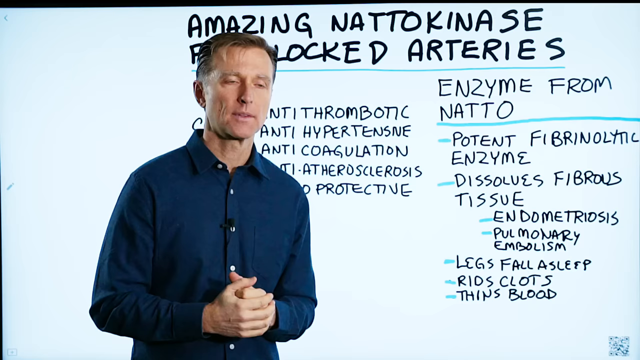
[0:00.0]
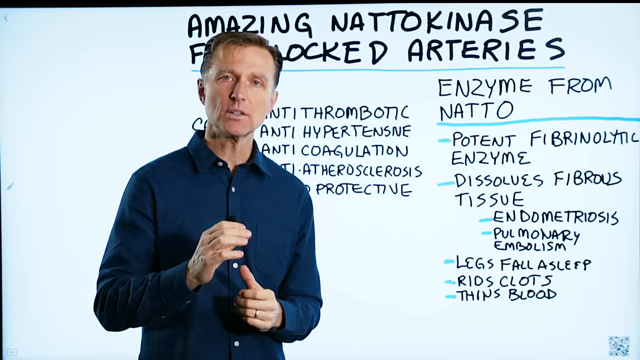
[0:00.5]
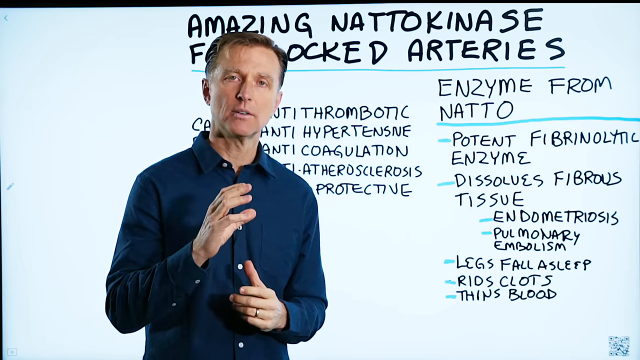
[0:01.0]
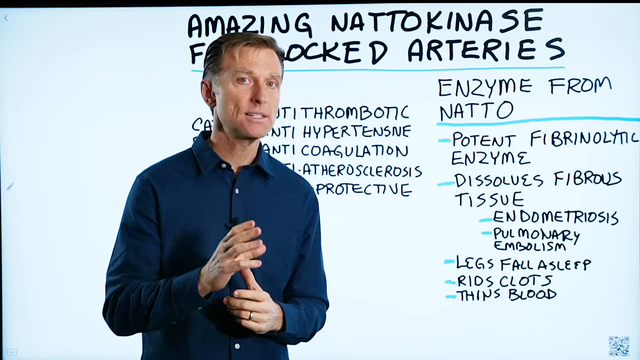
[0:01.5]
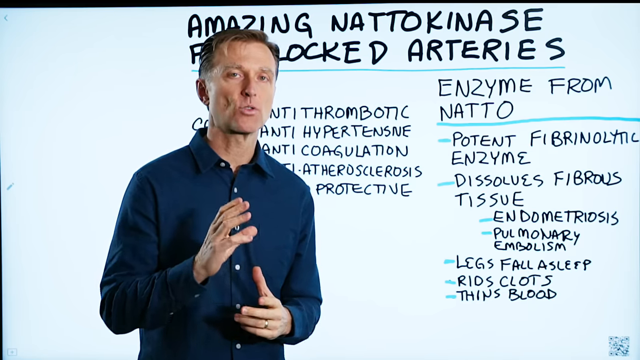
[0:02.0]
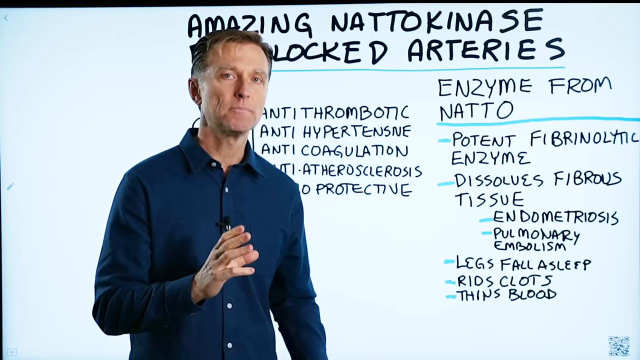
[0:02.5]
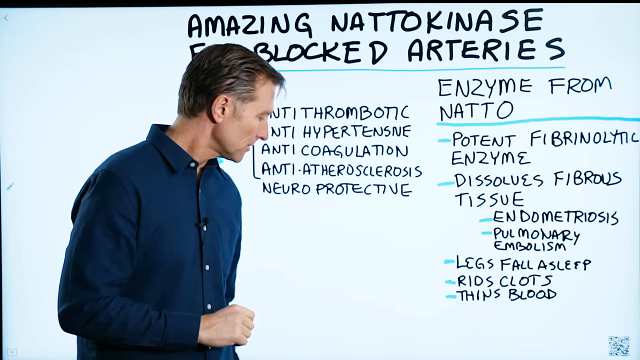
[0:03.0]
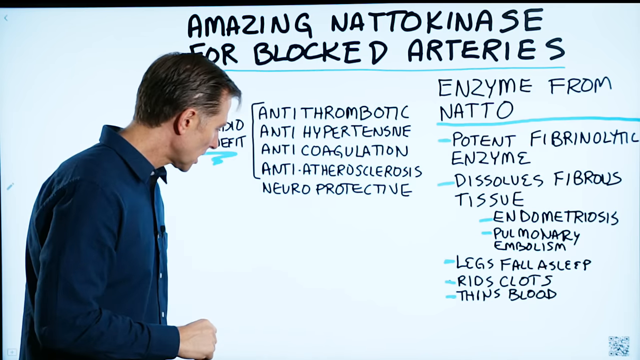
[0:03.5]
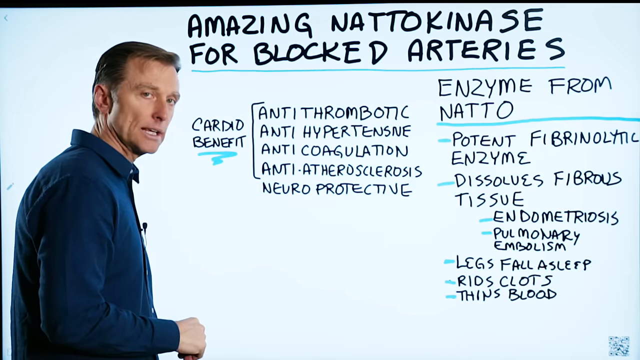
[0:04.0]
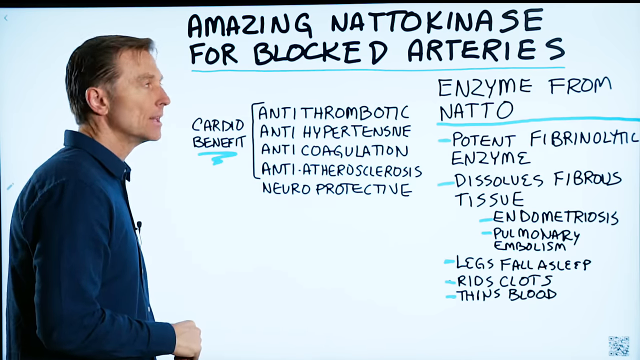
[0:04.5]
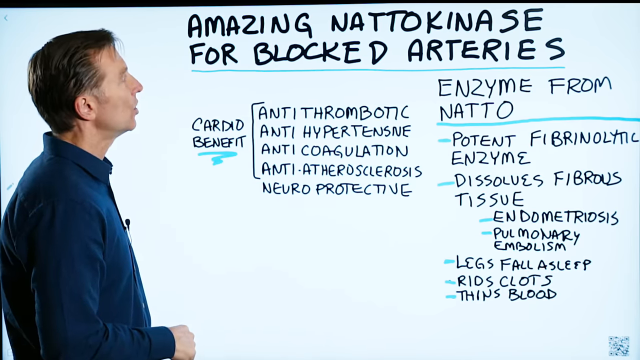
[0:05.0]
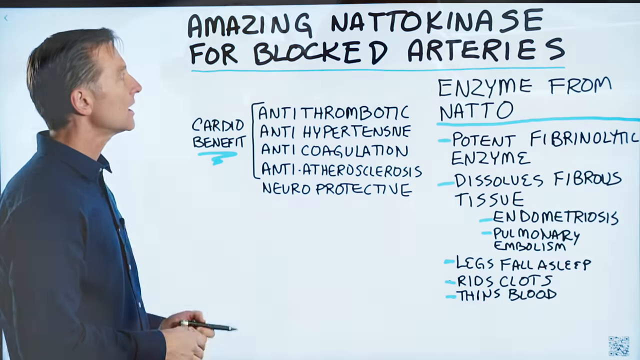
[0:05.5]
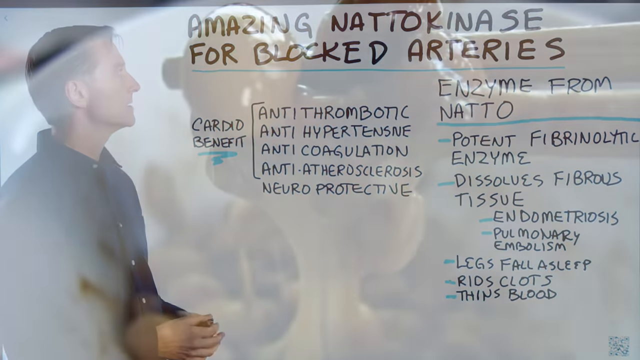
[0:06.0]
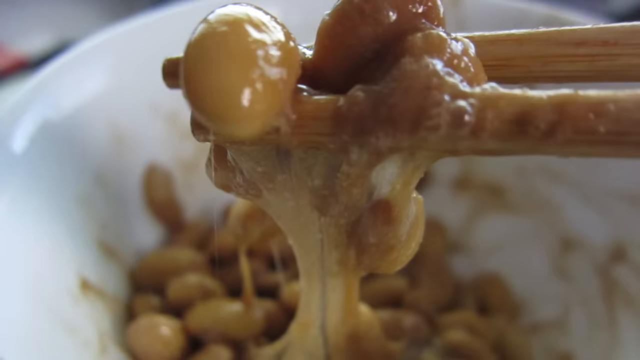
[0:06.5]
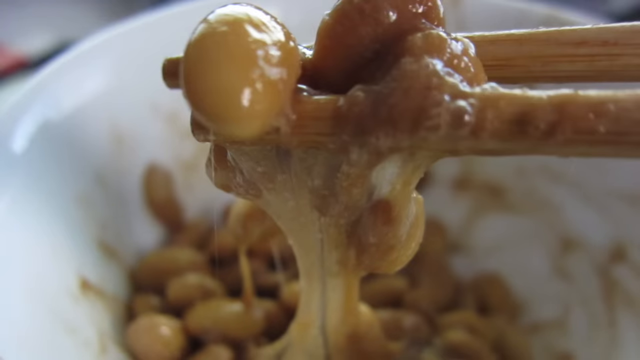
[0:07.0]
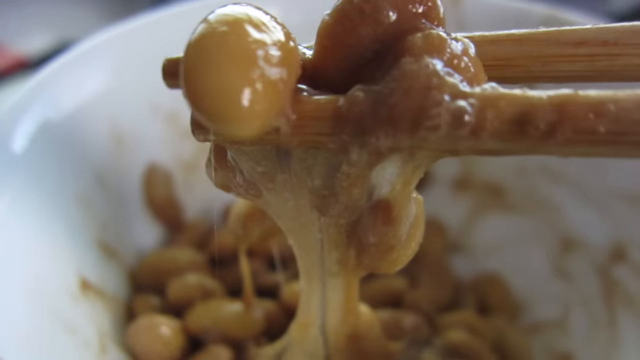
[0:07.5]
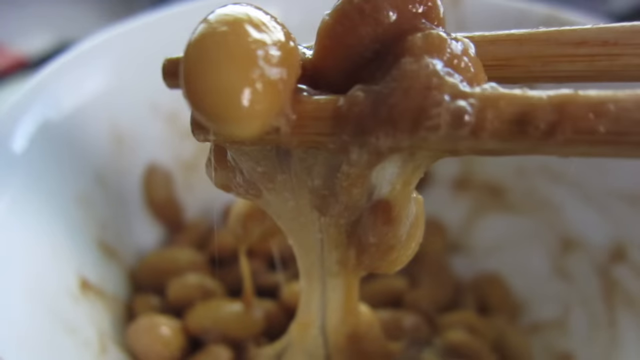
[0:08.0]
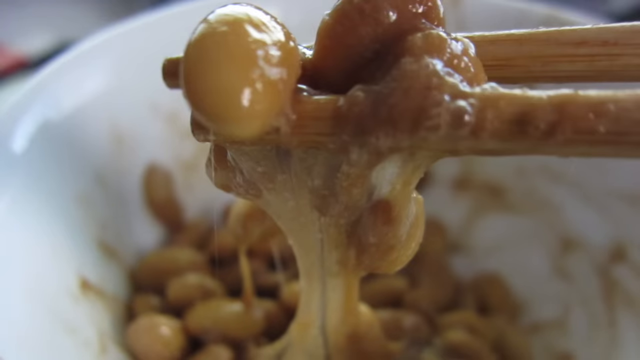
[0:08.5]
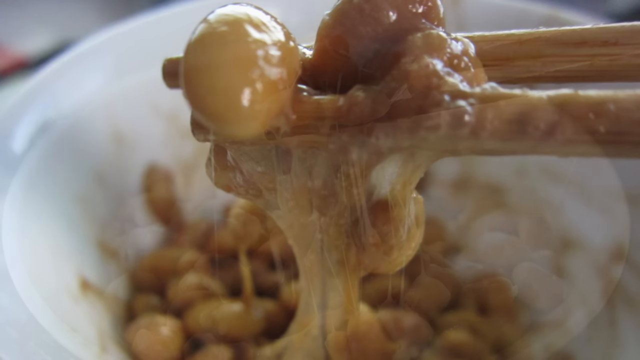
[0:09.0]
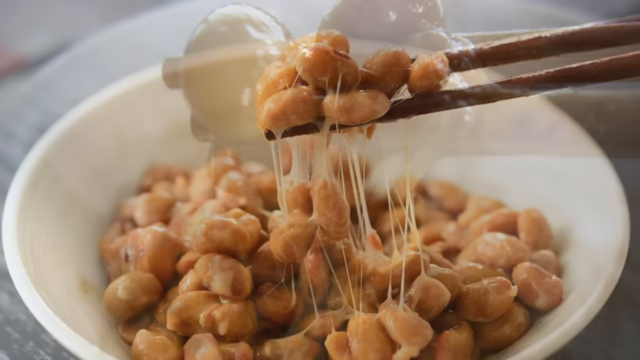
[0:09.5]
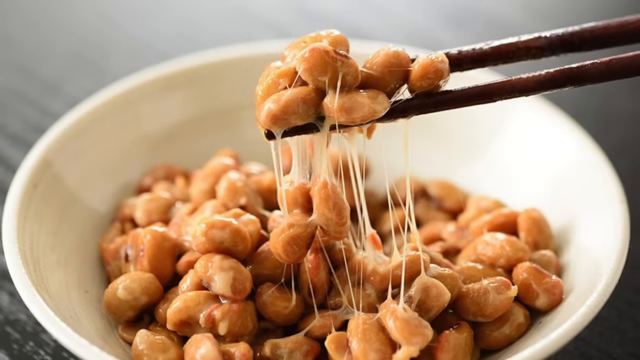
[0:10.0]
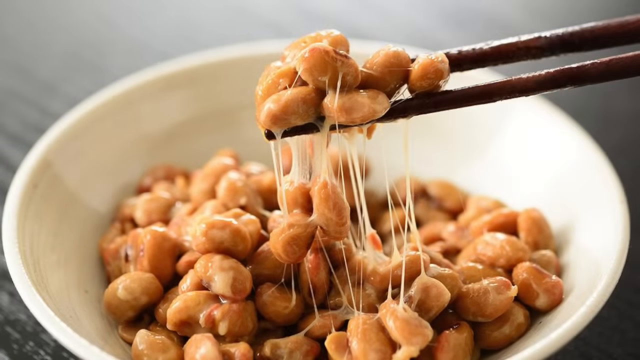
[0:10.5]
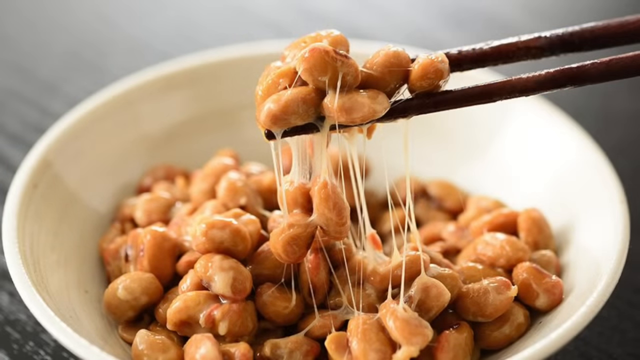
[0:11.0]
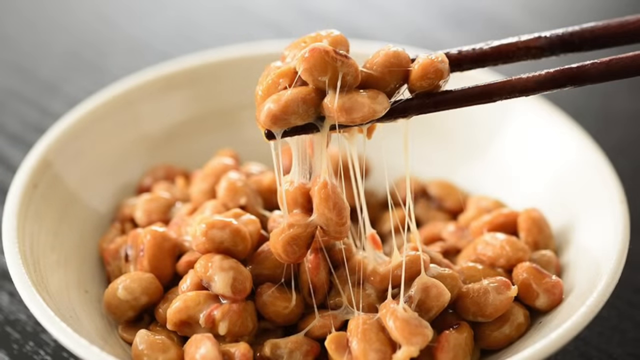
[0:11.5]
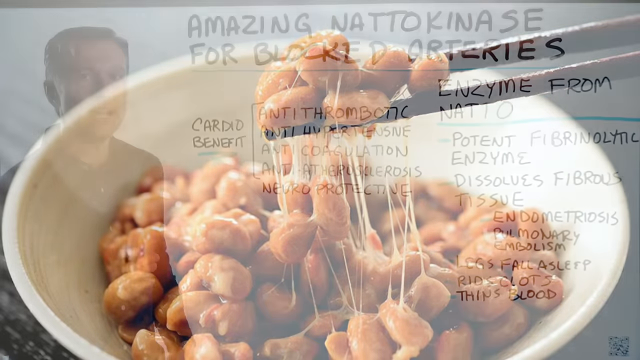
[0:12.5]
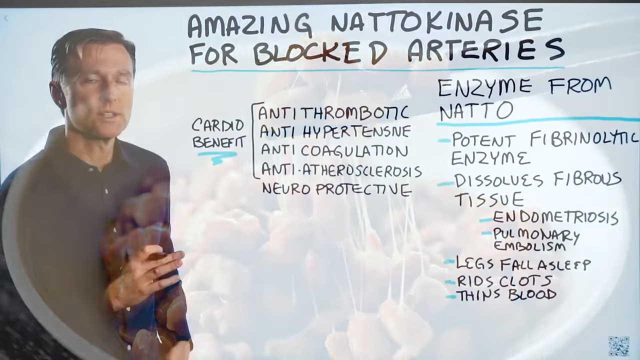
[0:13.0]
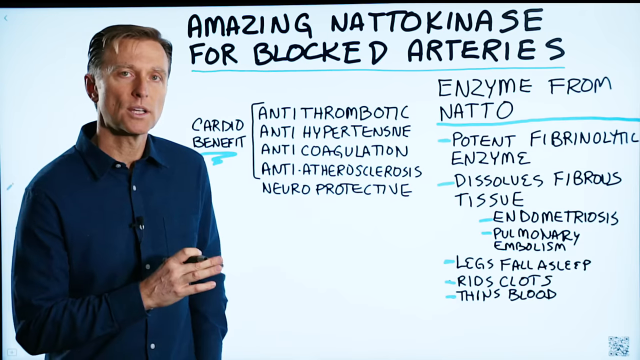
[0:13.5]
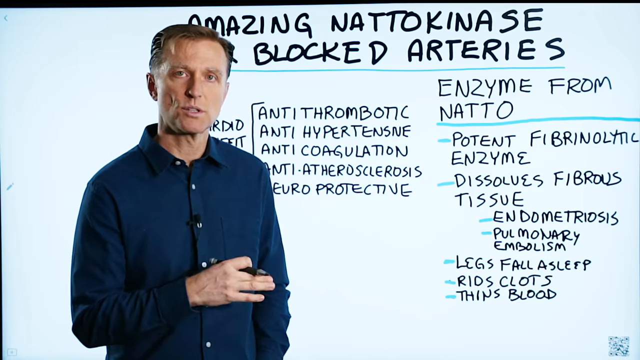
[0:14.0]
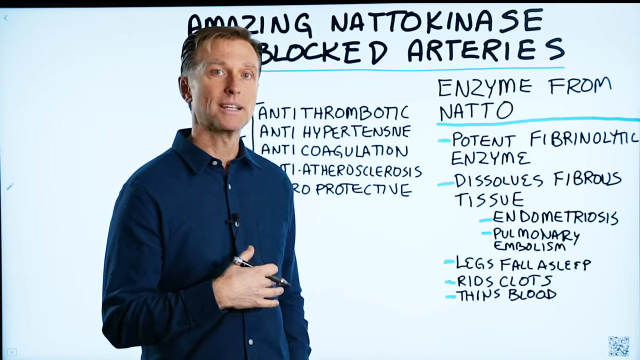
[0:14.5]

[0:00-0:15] The video opens with a picture of some kind of nuts on a spoon, along with a man and a name. A white man in a blue shirt talks while standing in front of a whiteboard with words on it. Chopsticks pick up some sticky-looking beans. The man appears again in front of the whiteboard, and there are two stationary shots of gross-looking sticky beans in a white bowl. Only the one man appears, in a single setting in front of the whiteboard. Words read "Natokinesis amazing effect on blocked", apparently followed by "arteries".